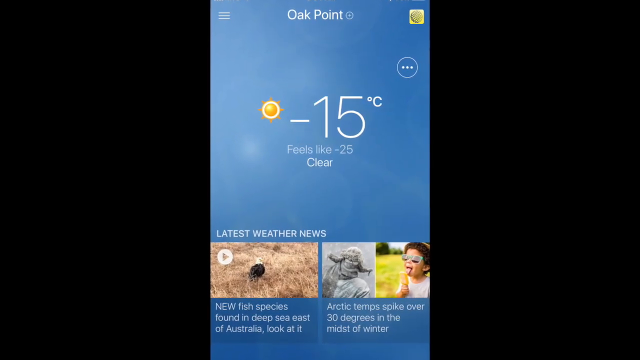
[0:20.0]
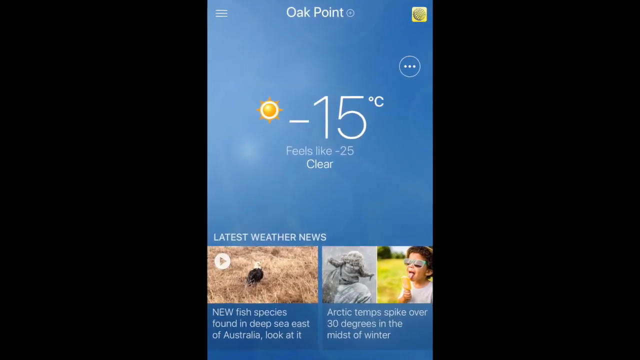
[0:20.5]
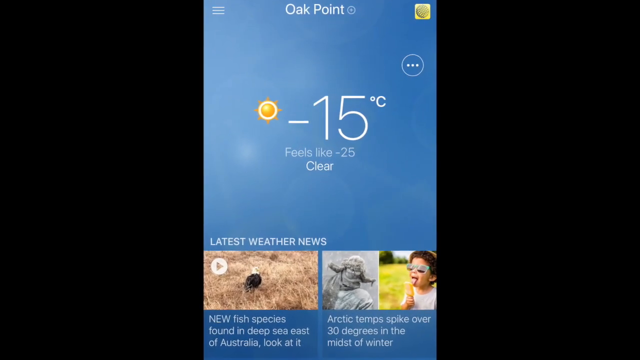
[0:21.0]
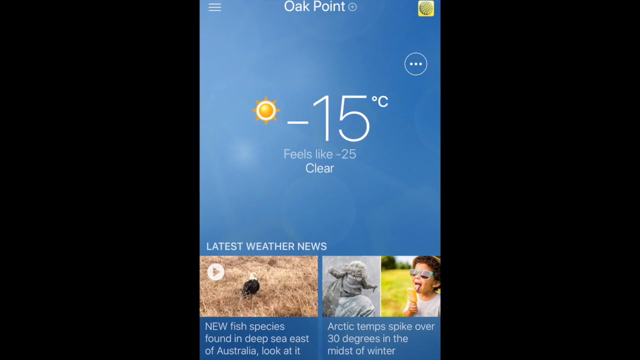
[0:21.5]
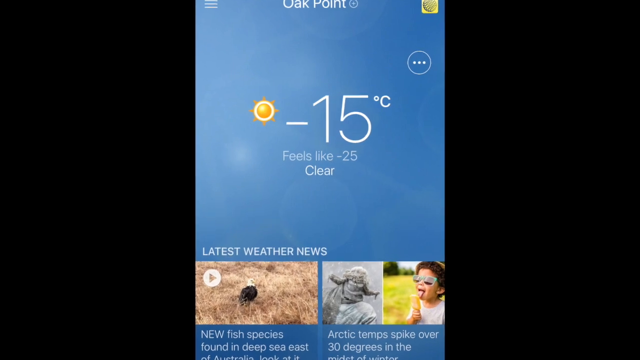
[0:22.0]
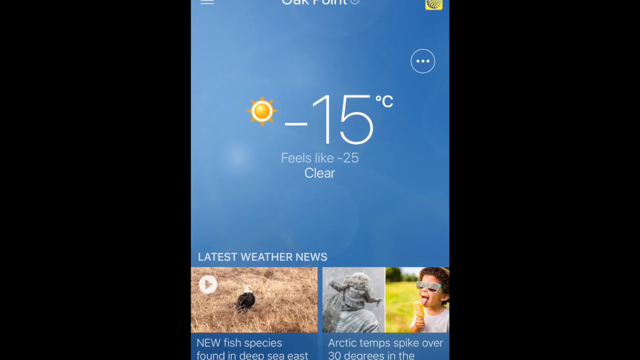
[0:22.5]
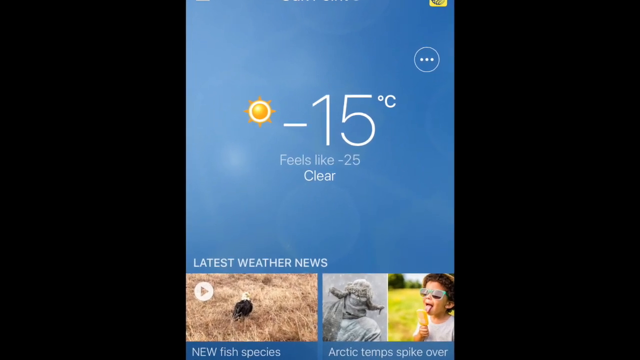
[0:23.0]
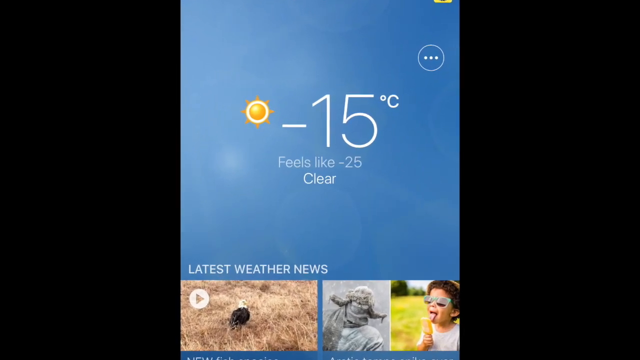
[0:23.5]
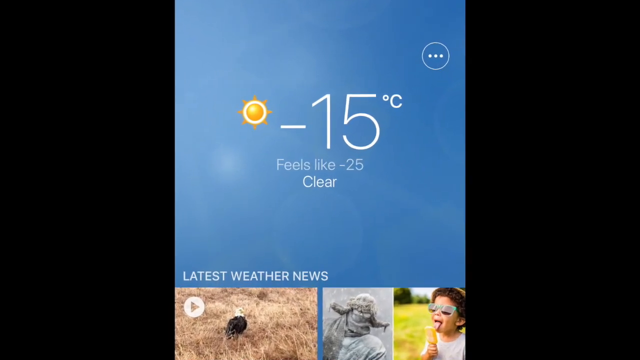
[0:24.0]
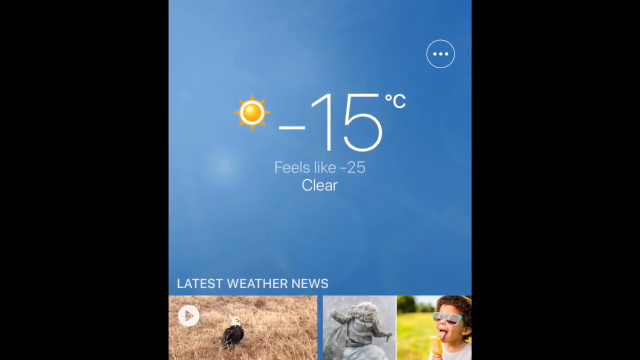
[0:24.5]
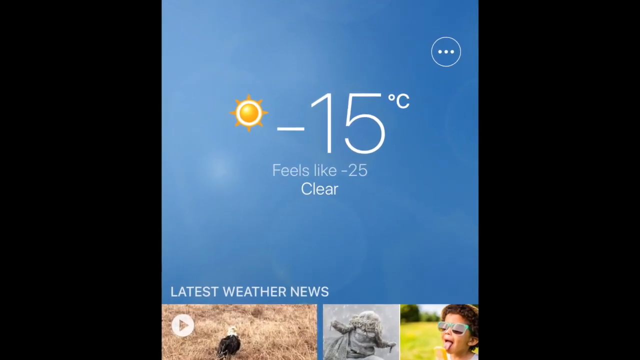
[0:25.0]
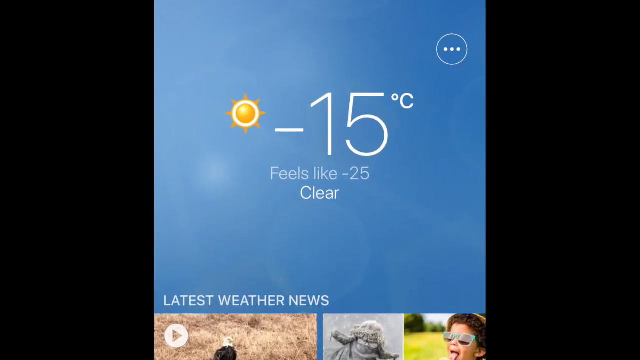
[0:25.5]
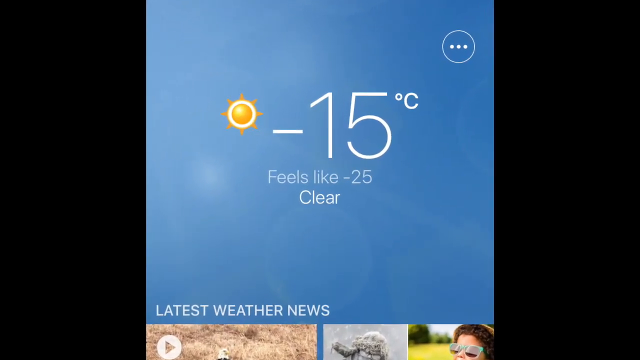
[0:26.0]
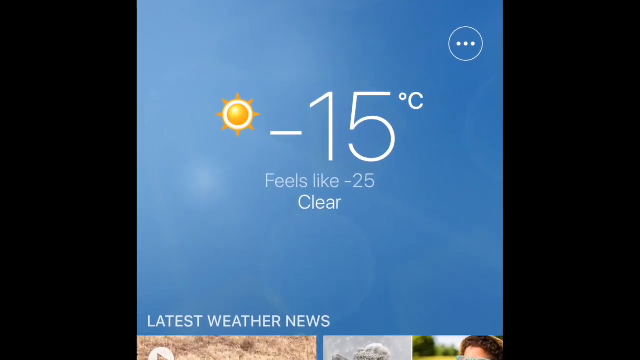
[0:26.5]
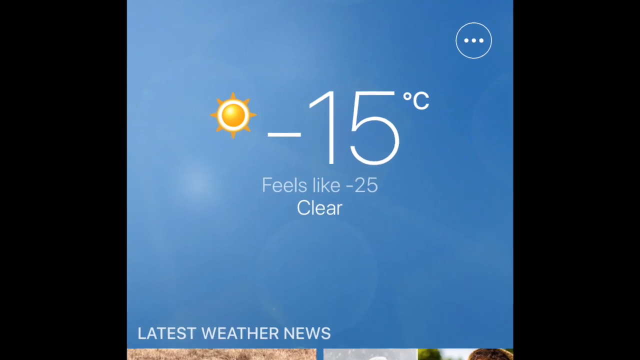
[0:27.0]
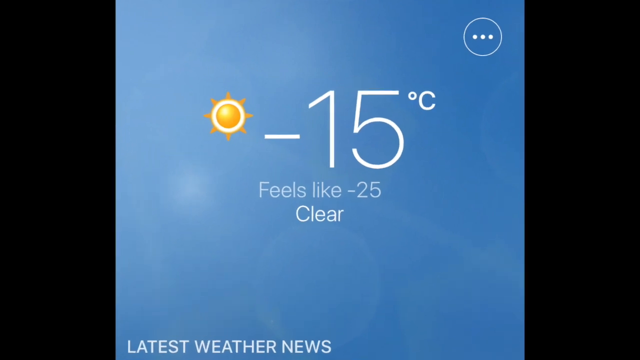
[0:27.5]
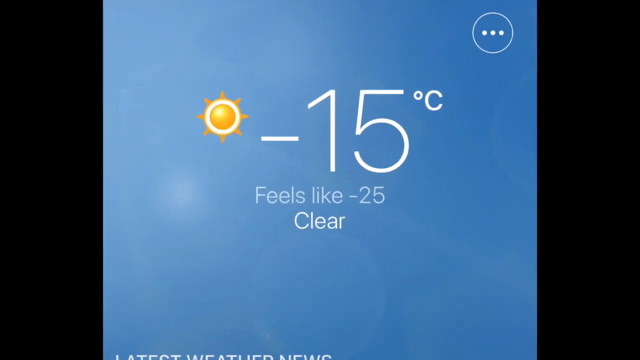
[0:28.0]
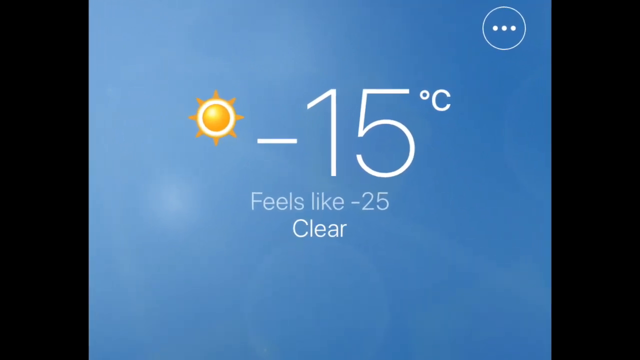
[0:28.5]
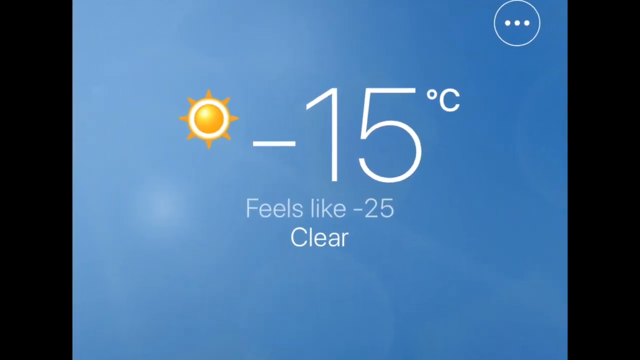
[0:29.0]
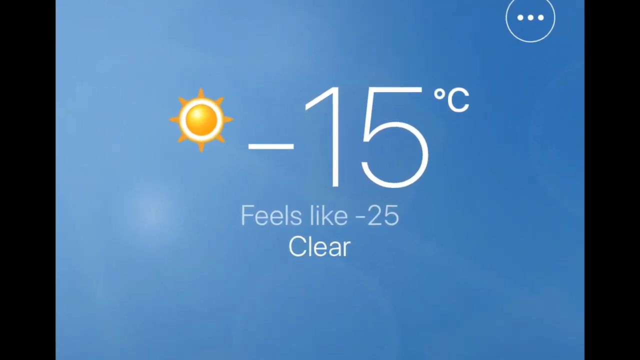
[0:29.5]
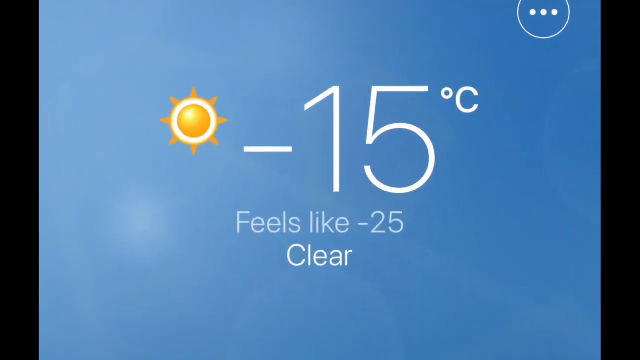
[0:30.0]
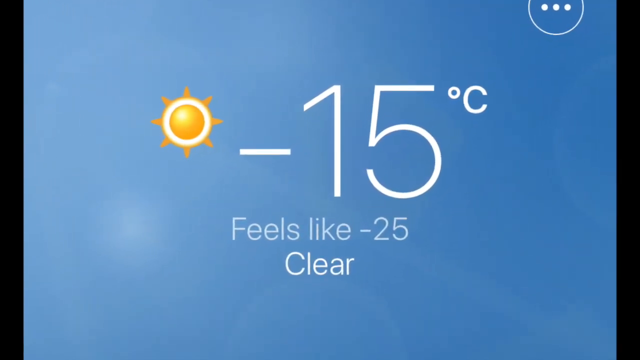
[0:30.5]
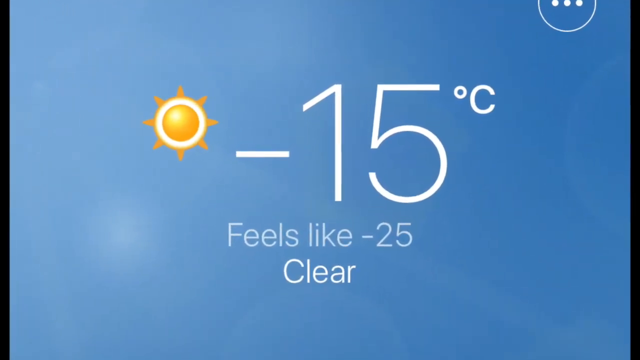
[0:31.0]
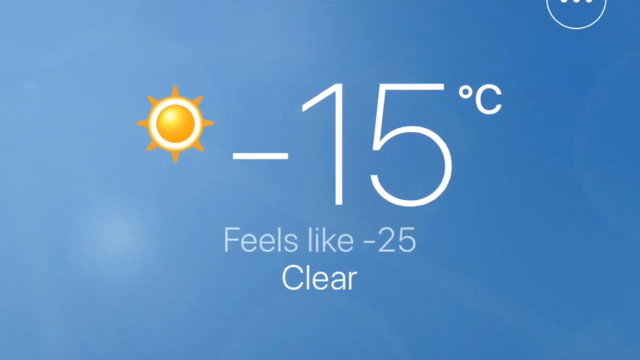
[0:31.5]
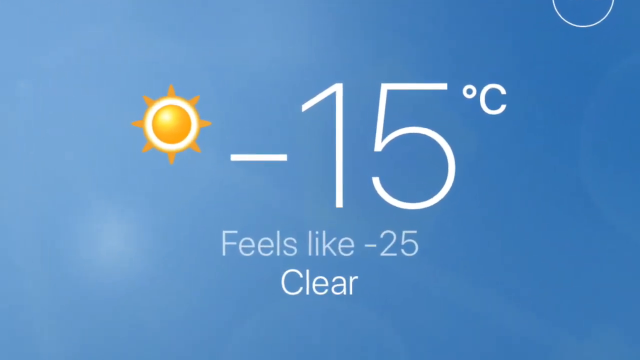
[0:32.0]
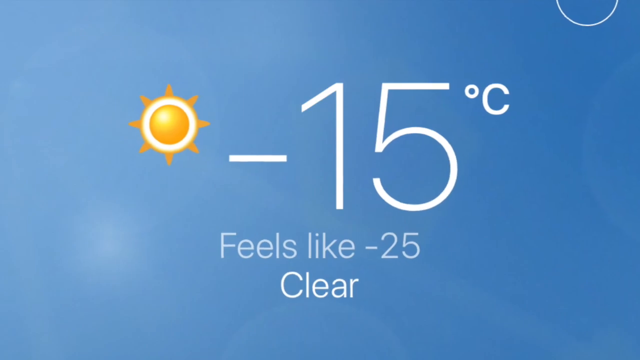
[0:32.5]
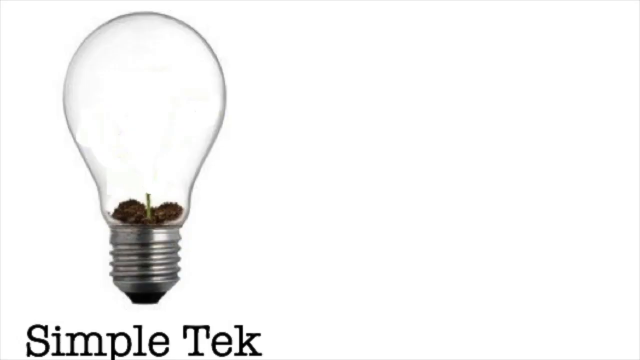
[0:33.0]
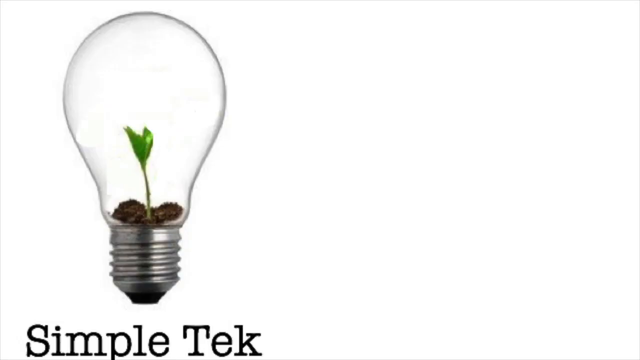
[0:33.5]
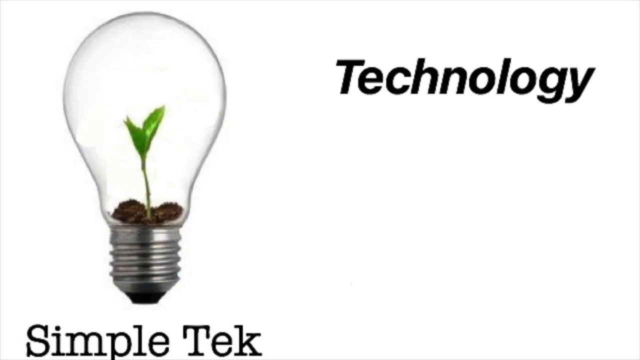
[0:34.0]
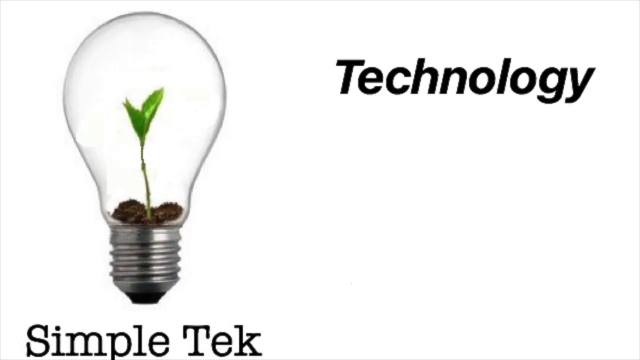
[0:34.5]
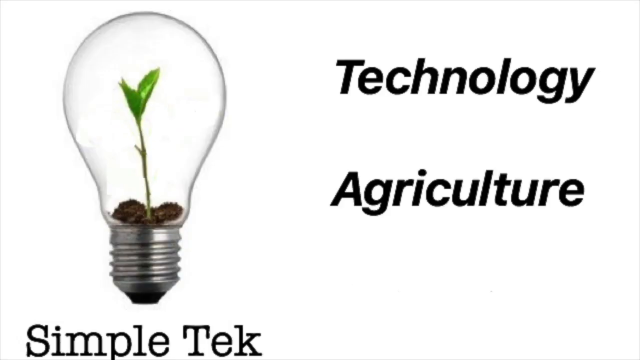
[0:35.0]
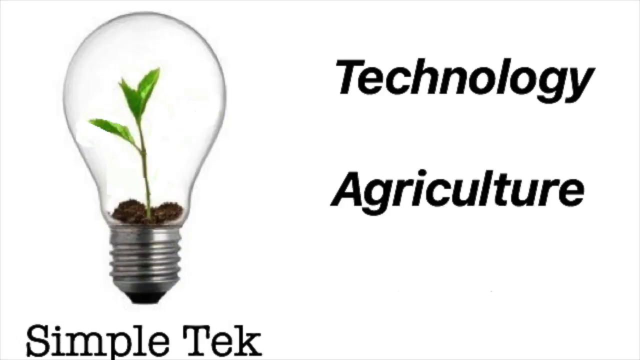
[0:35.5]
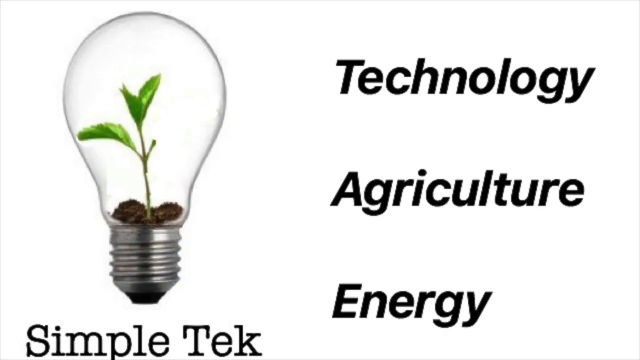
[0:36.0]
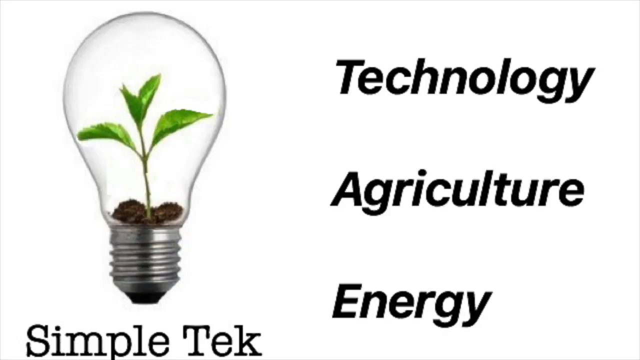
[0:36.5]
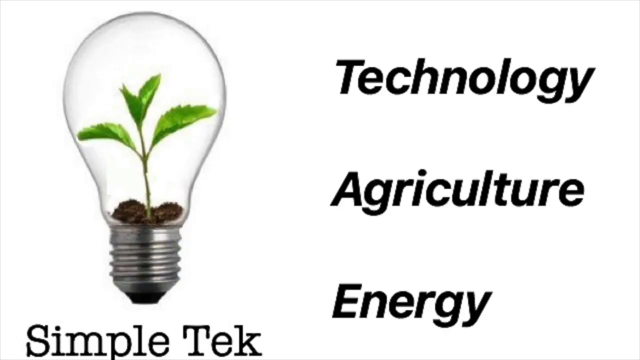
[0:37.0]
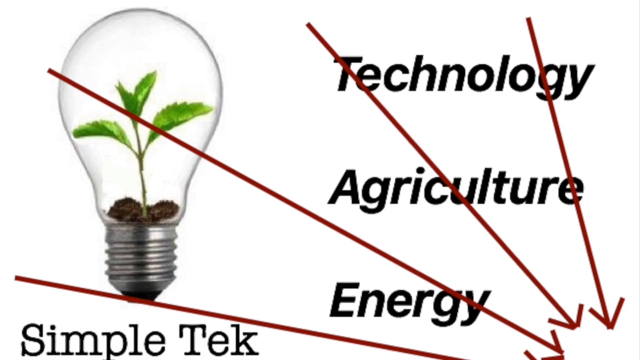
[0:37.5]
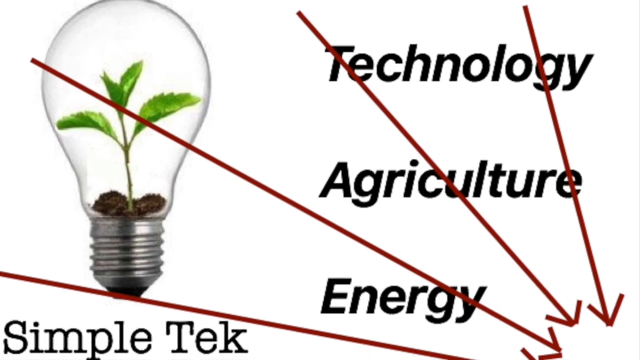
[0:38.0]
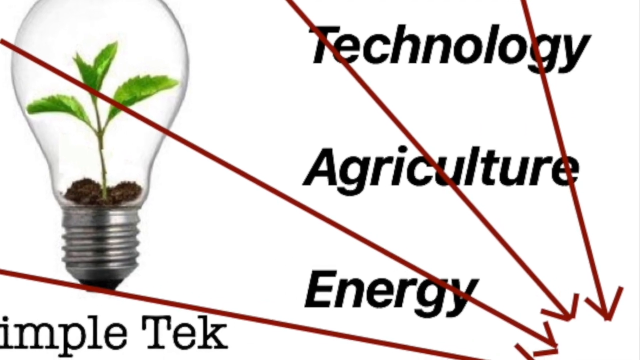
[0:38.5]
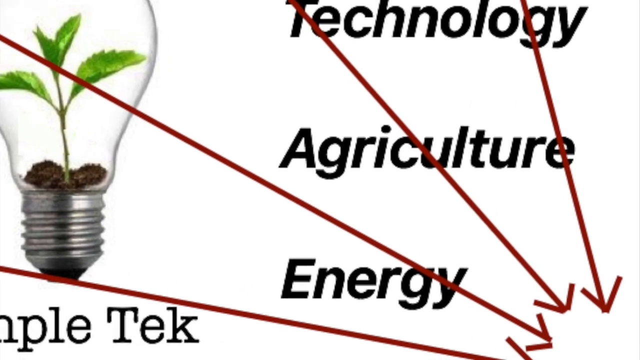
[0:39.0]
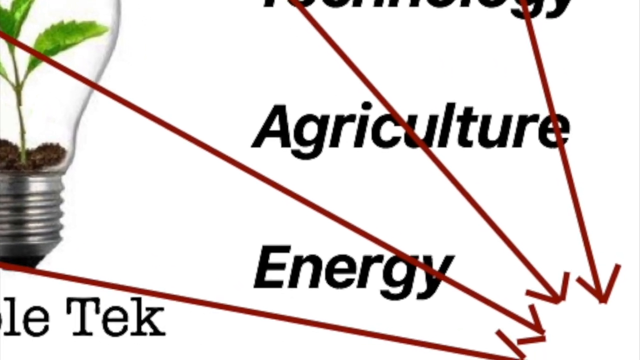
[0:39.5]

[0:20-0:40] The weather is shown at negative 15 degrees. A graphic shows a light bulb with a plant growing inside it, growing up out of the soil, along with the words technology, agriculture and energy, pointing down to a subscribe button. The weather appears again, and the video zooms in repeatedly on the same thing. No people or characters are visible.